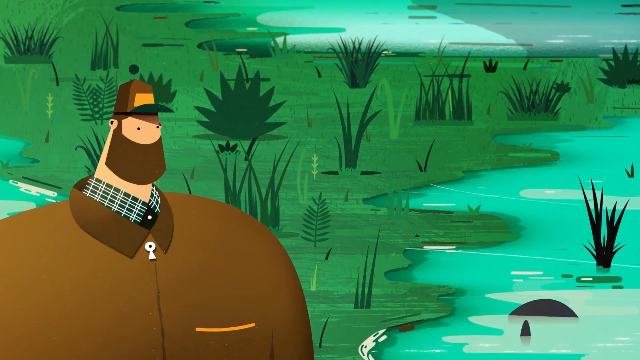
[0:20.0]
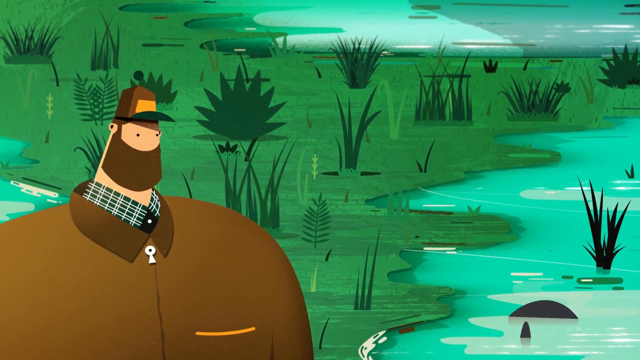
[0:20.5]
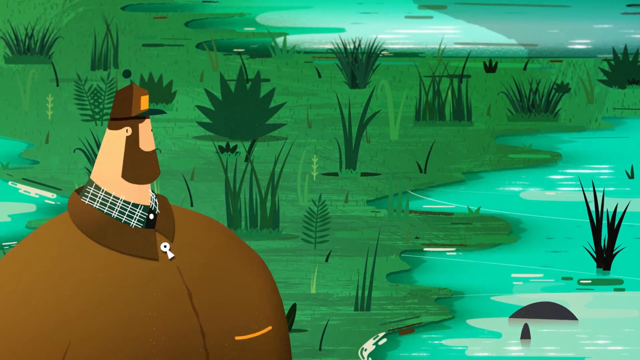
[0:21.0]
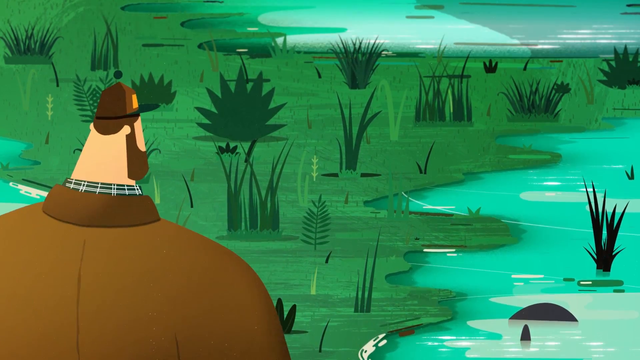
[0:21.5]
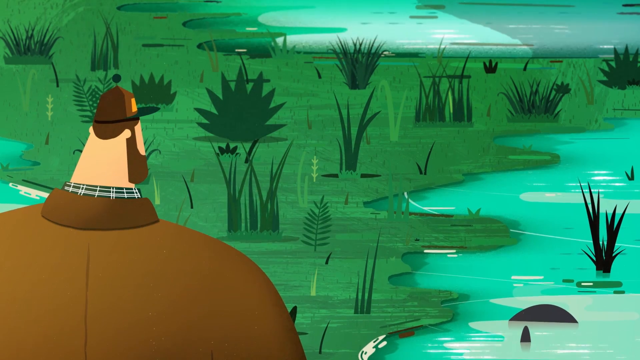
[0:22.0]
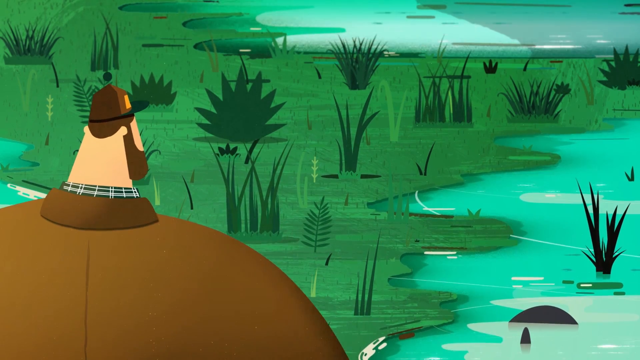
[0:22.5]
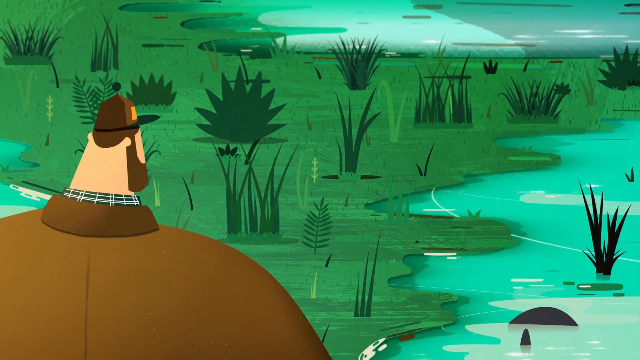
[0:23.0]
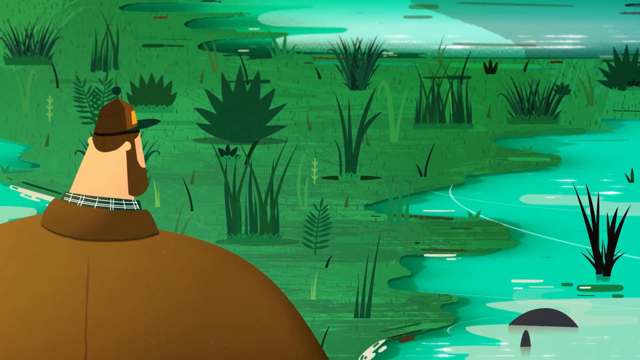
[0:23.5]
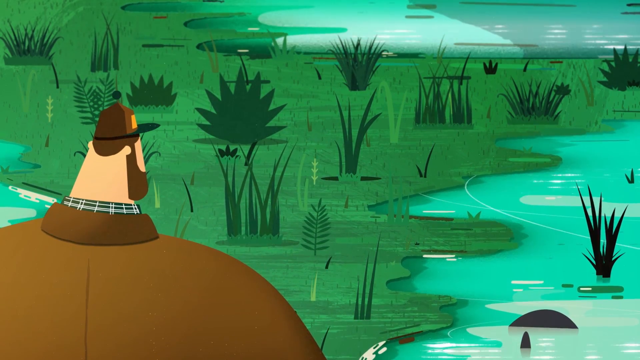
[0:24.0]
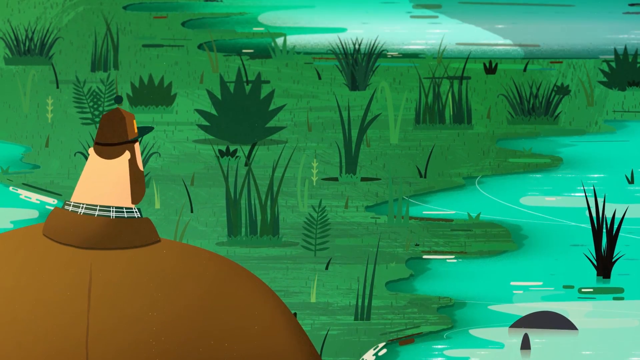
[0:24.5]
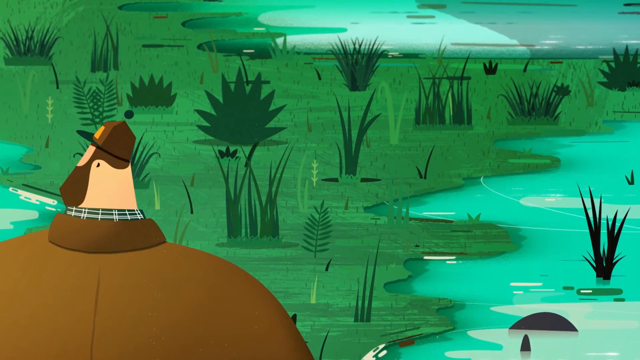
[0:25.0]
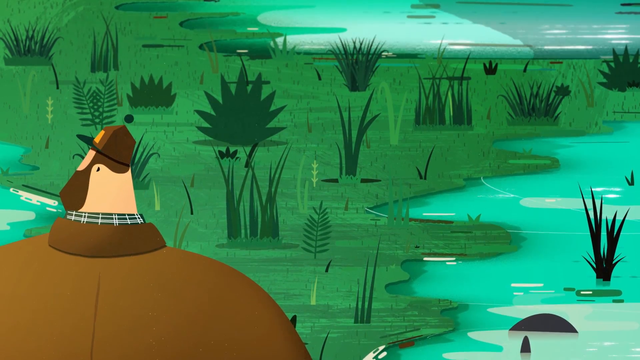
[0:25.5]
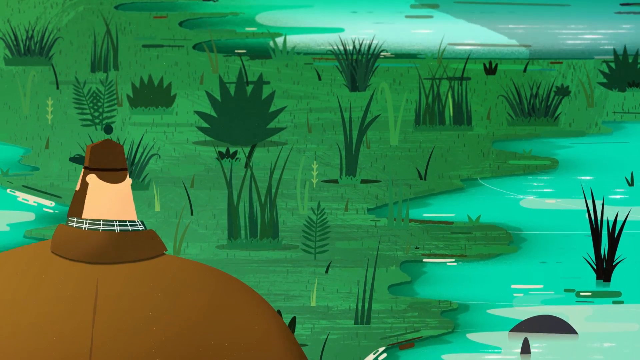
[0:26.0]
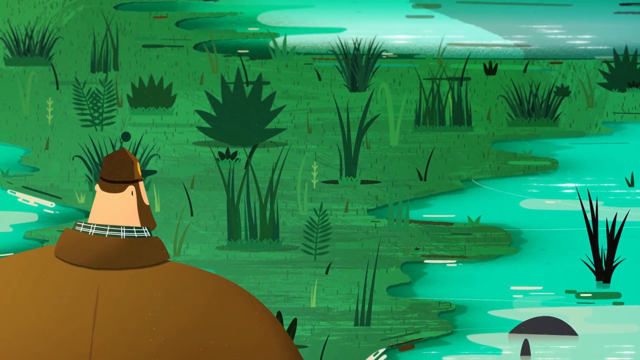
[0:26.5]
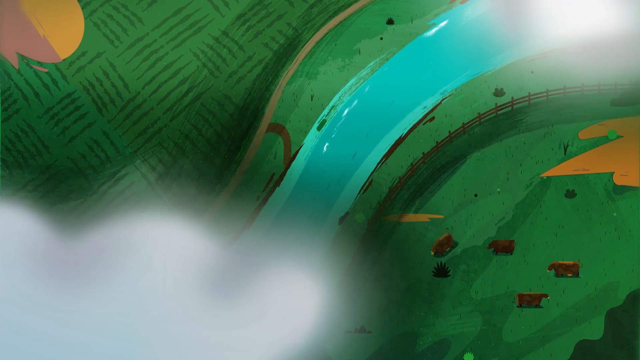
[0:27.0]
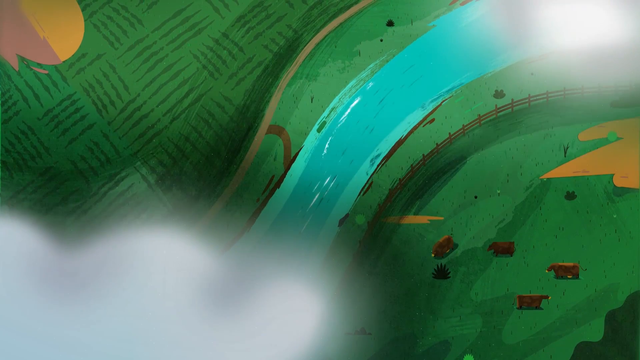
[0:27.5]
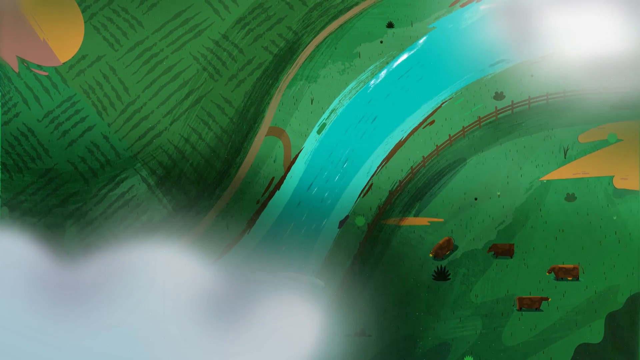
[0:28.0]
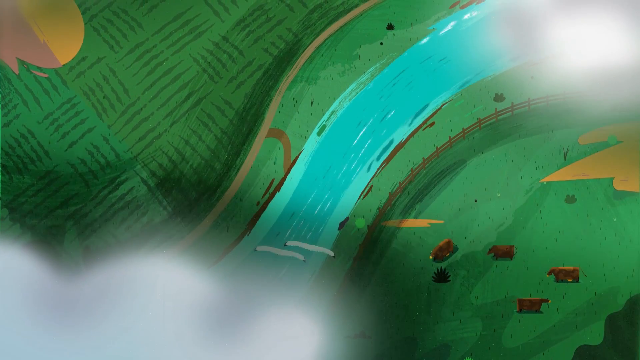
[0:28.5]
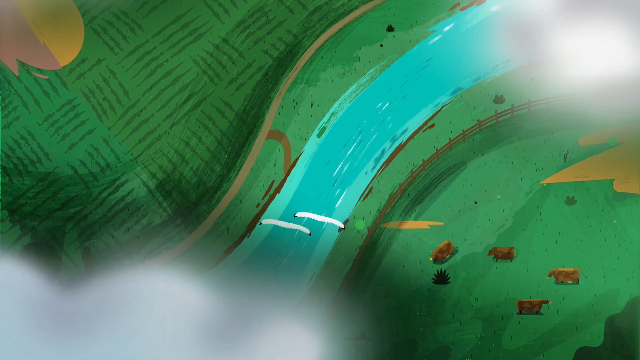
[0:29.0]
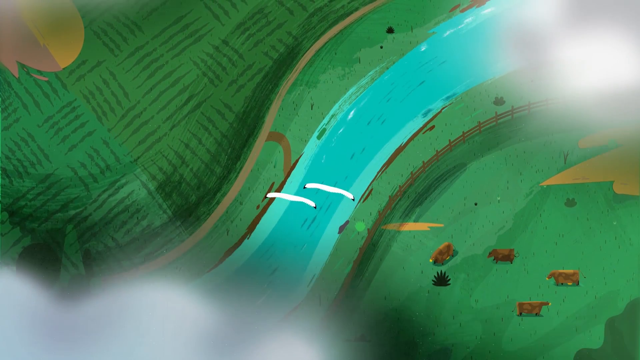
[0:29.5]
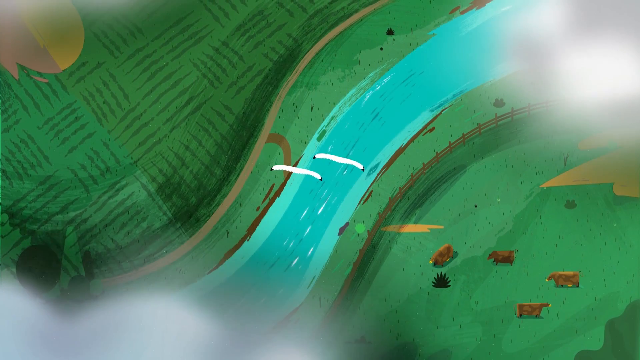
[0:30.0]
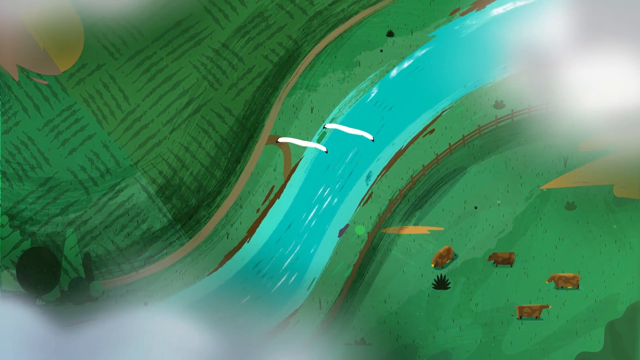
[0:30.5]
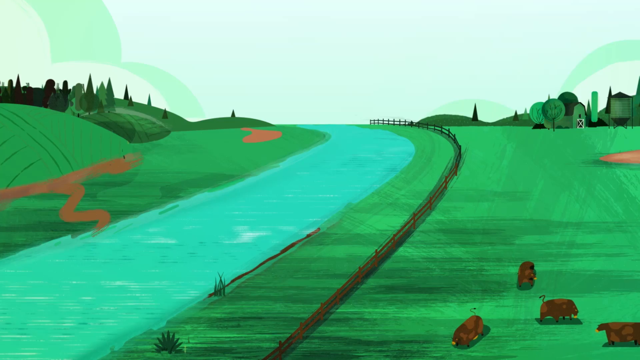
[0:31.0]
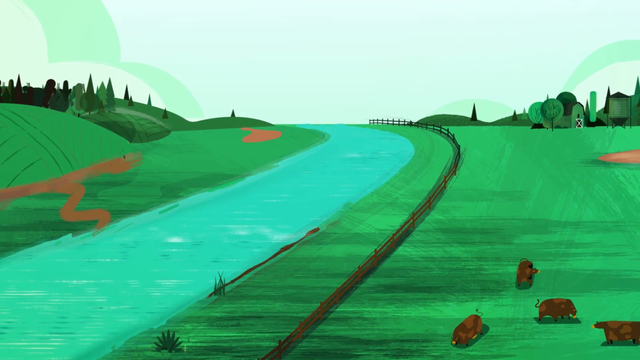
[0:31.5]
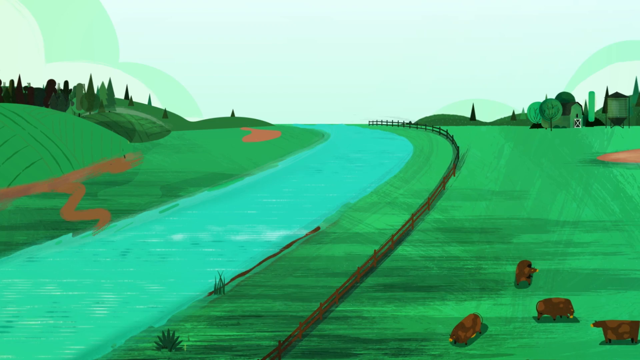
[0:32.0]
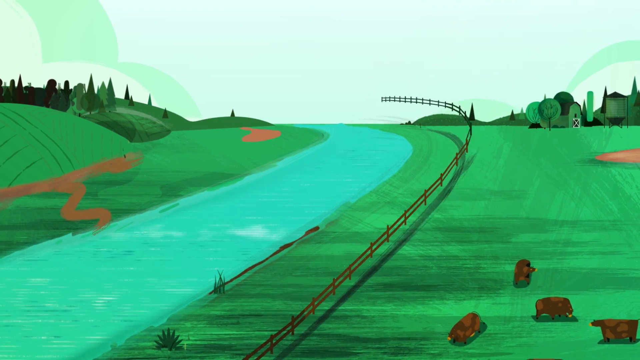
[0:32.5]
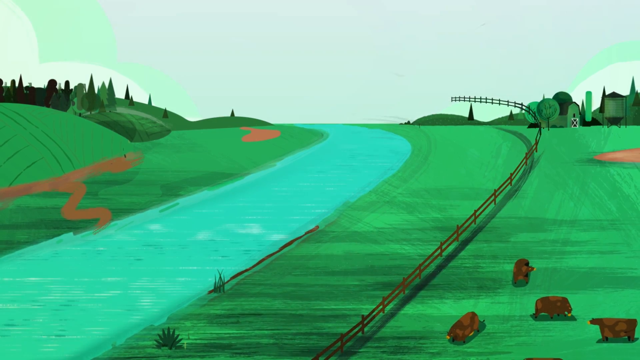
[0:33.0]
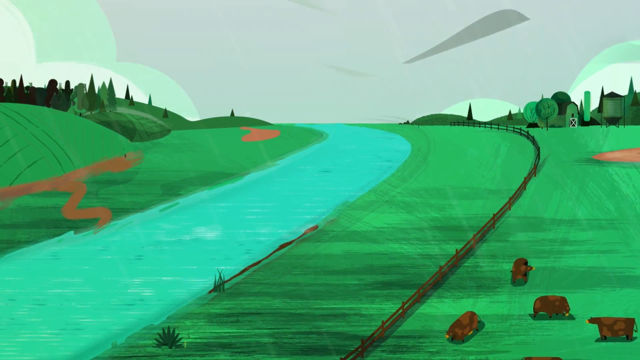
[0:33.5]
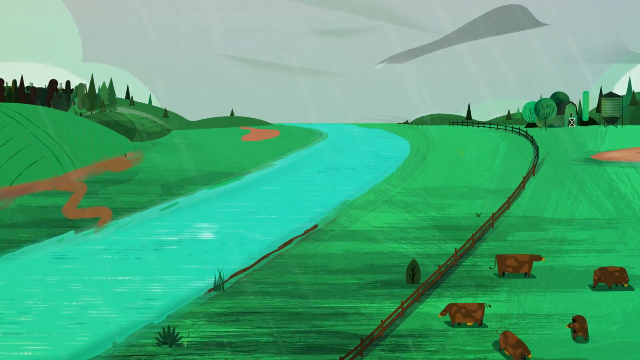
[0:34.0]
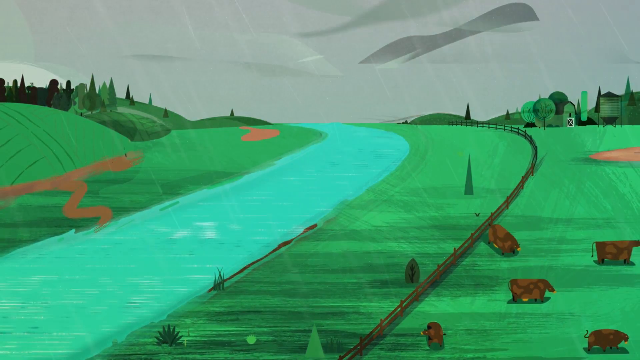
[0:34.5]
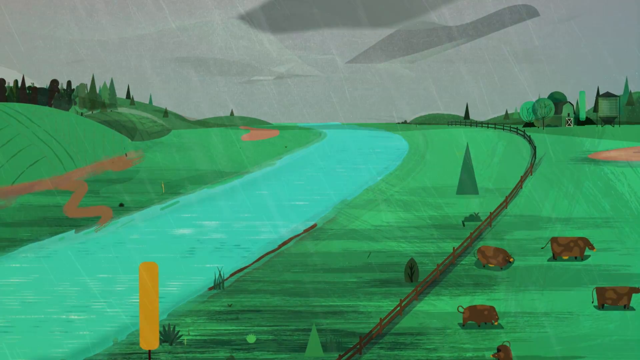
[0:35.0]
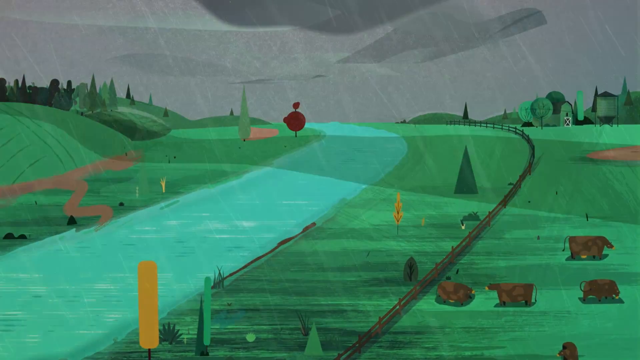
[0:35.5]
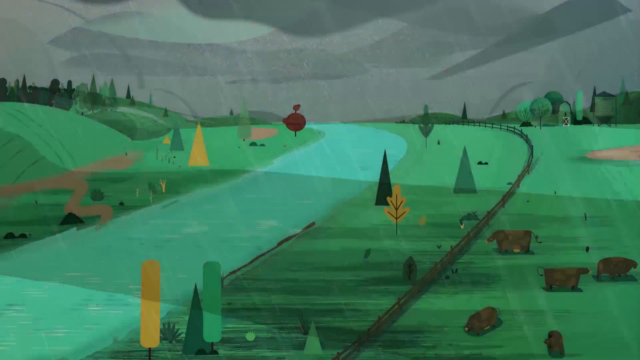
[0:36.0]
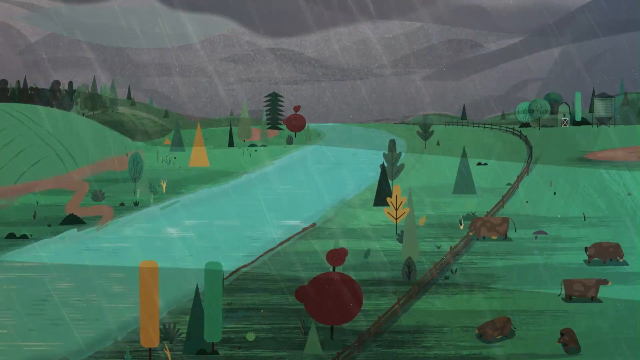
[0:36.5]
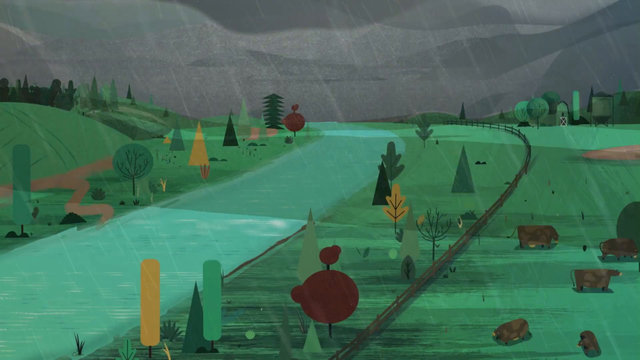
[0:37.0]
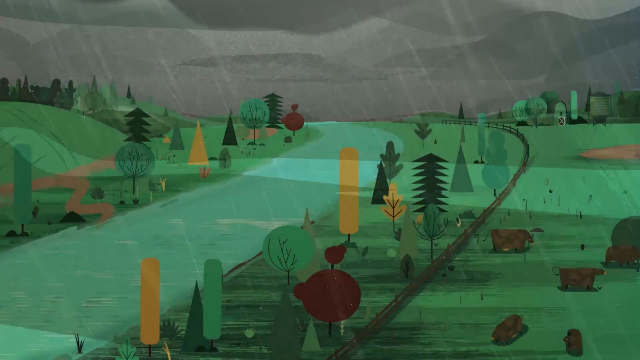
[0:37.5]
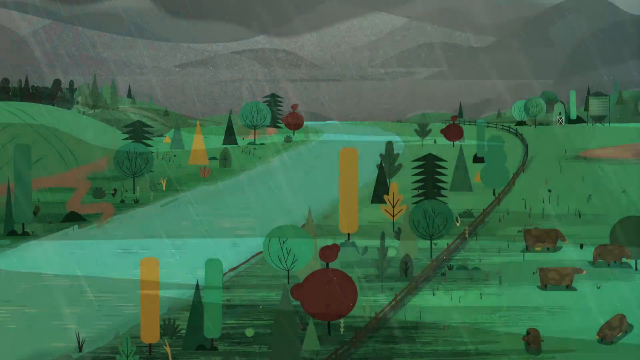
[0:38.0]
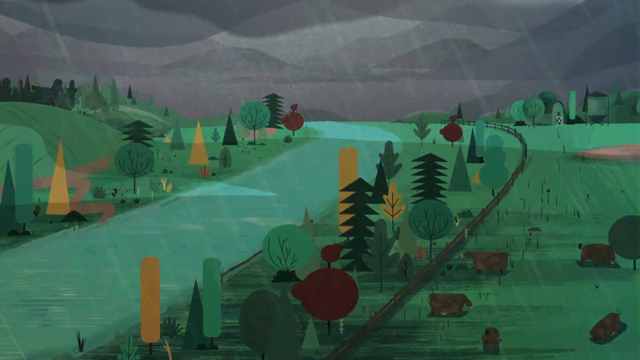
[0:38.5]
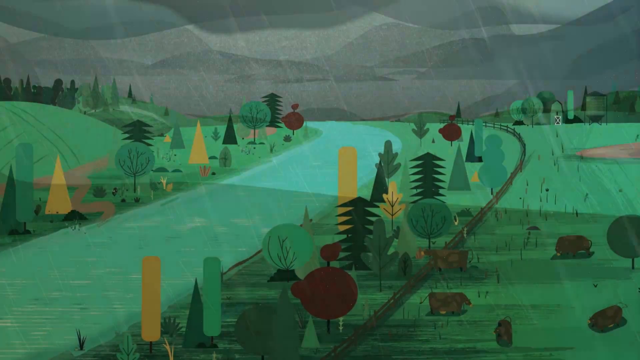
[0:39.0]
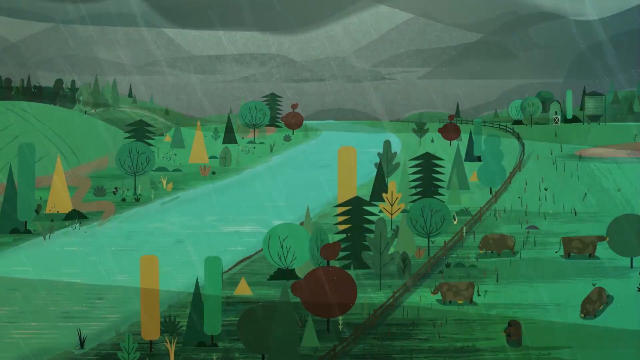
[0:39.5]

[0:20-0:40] The animated man looks toward the right side, then turns around and looks at the area behind him, which looks like some kind of marsh or pond area with a bunch of plants sticking out of the water. He gives a sigh, his shoulders moving up and down. He turns toward the left side to look at more of the area, then turns back to face the right side. An overhead shot shows a river or stream with water flowing down and some birds flying over the water. A bunch of brown cows are on the right side. The fence kind of moves up and toward the right side and lands on that right side, and more cows appear. In a time-lapse, rain comes in and the sky turns gray, more trees sprout up, and the cows move around. More trees sprout up on the left side of the fence, the rain keeps coming, and still more trees sprout up.